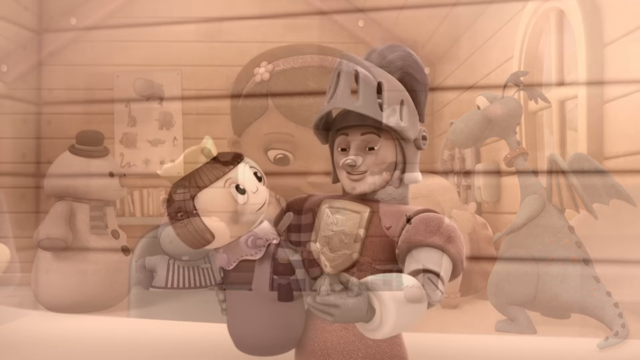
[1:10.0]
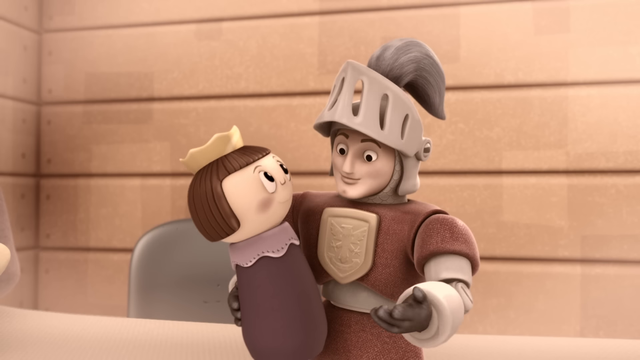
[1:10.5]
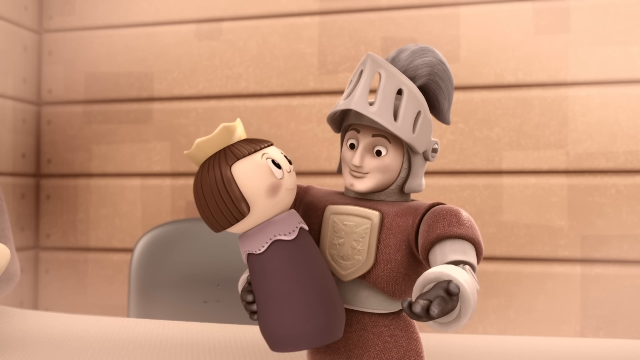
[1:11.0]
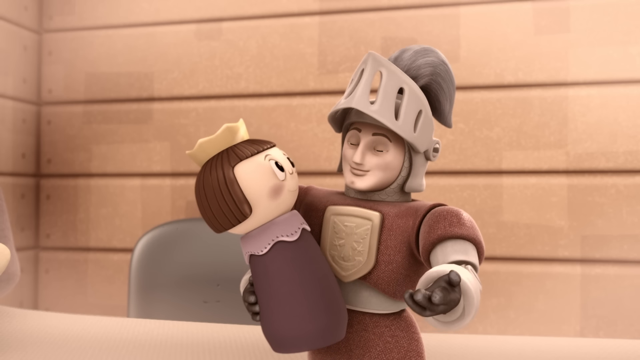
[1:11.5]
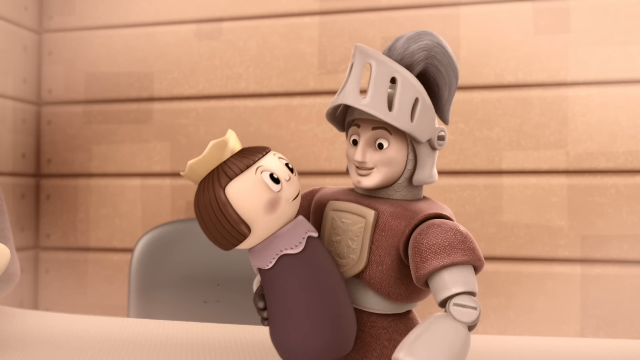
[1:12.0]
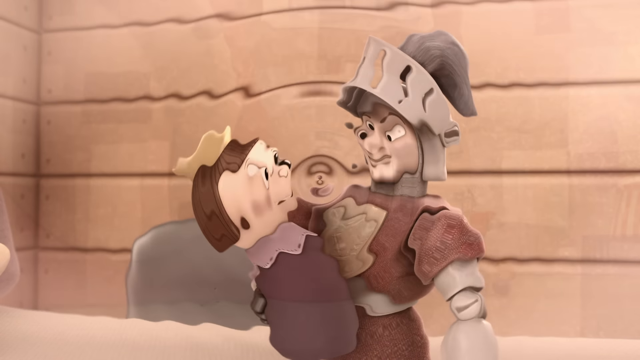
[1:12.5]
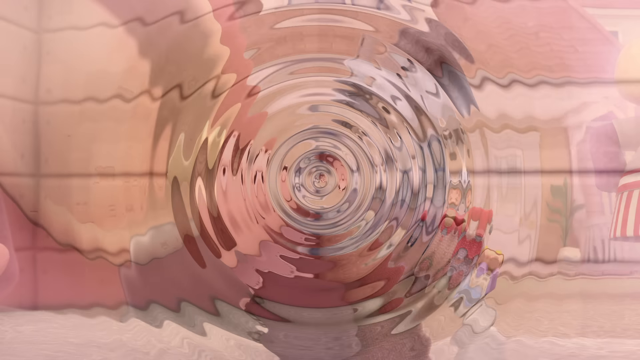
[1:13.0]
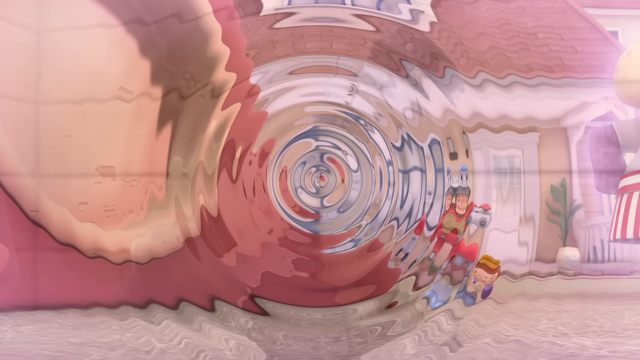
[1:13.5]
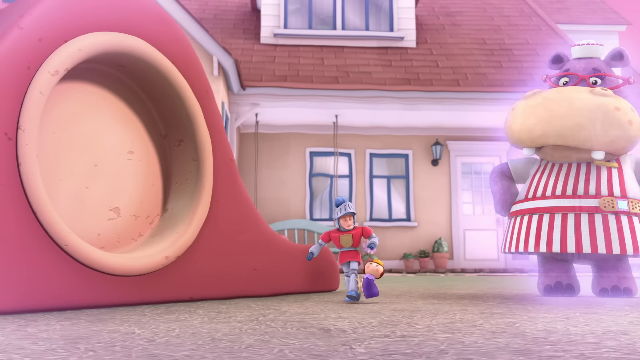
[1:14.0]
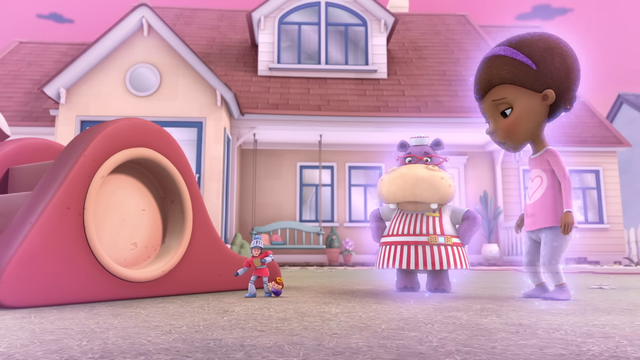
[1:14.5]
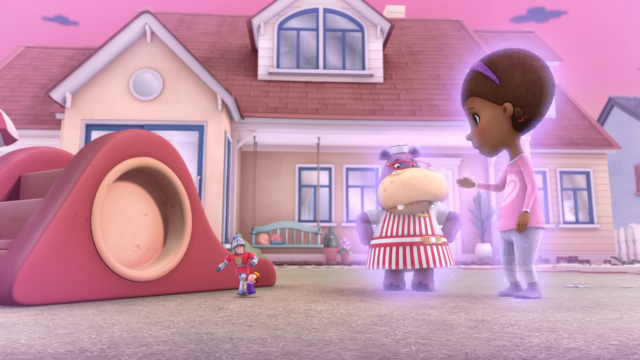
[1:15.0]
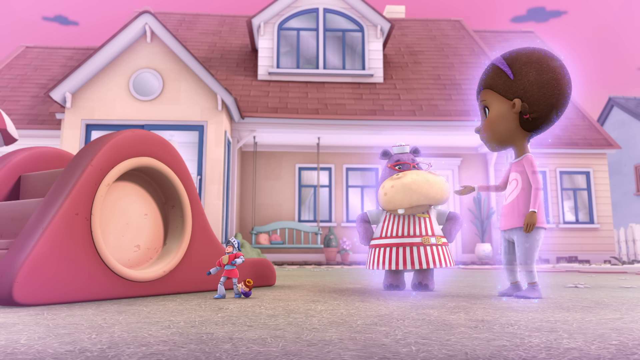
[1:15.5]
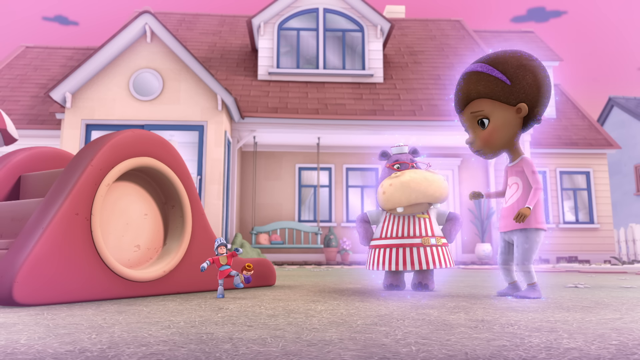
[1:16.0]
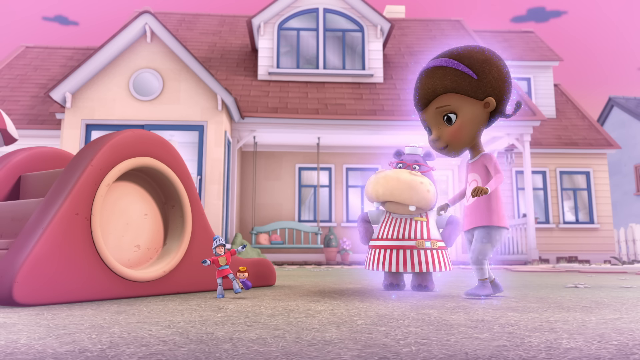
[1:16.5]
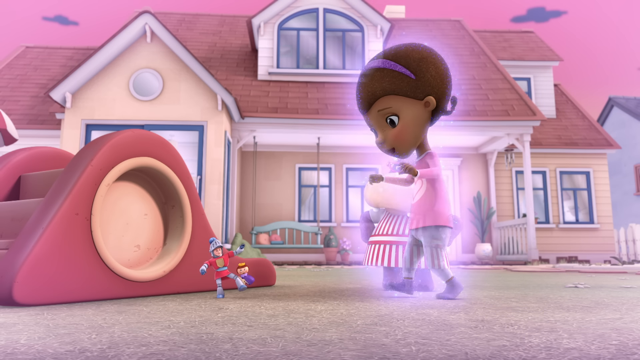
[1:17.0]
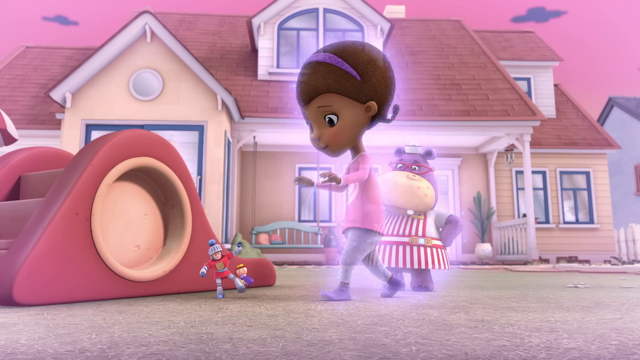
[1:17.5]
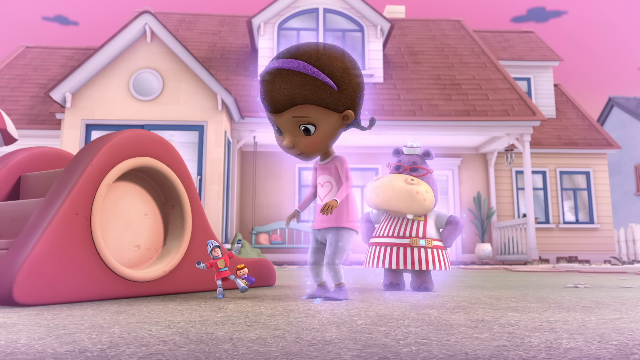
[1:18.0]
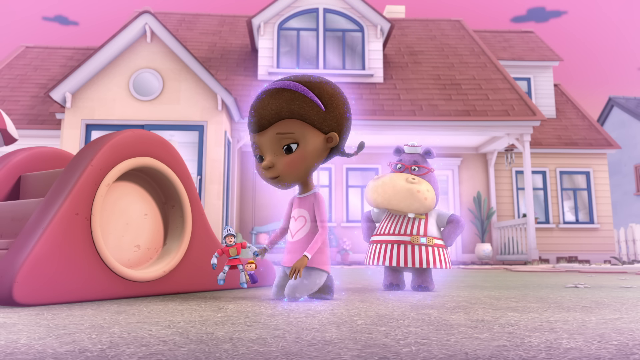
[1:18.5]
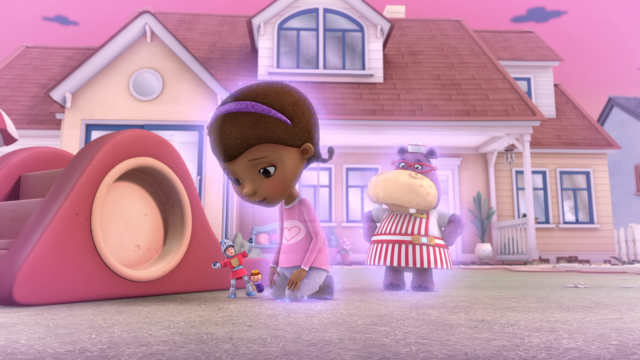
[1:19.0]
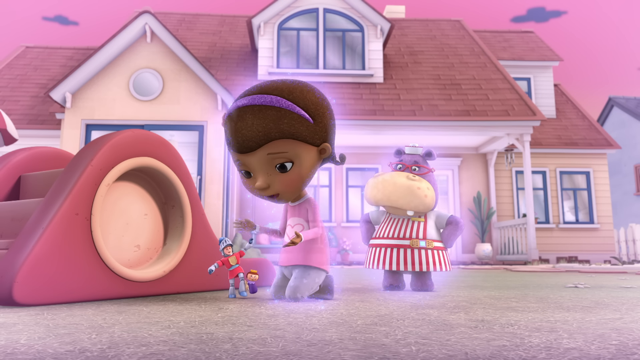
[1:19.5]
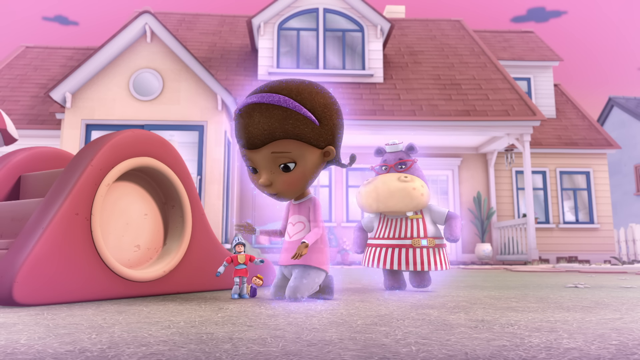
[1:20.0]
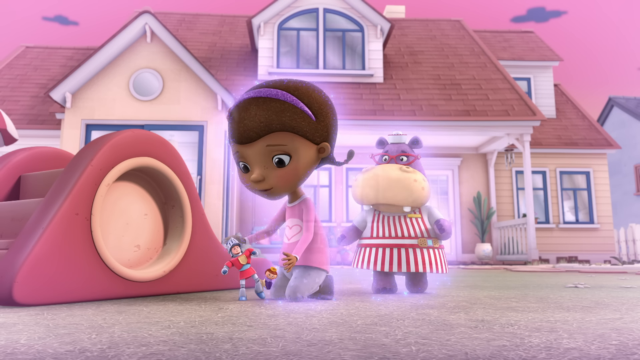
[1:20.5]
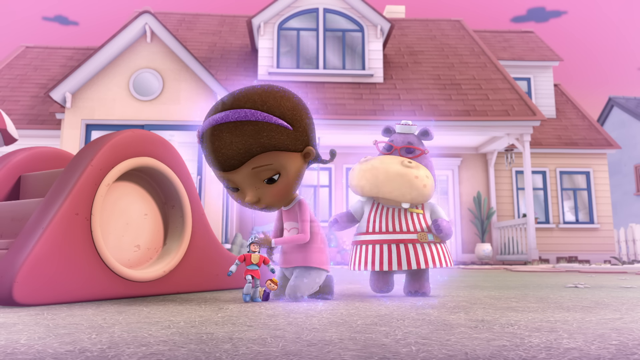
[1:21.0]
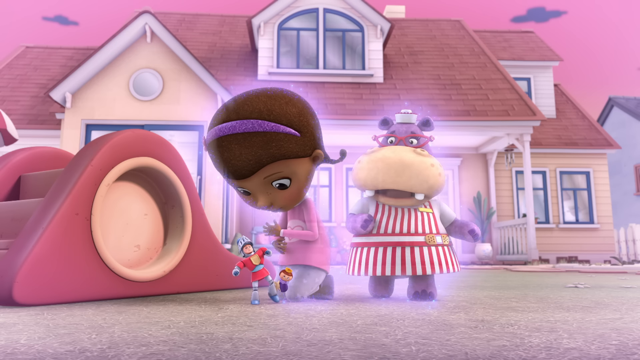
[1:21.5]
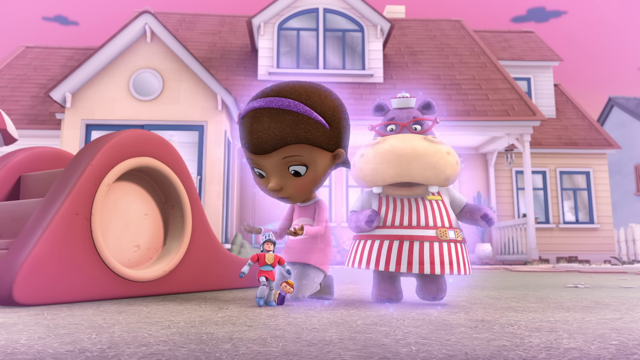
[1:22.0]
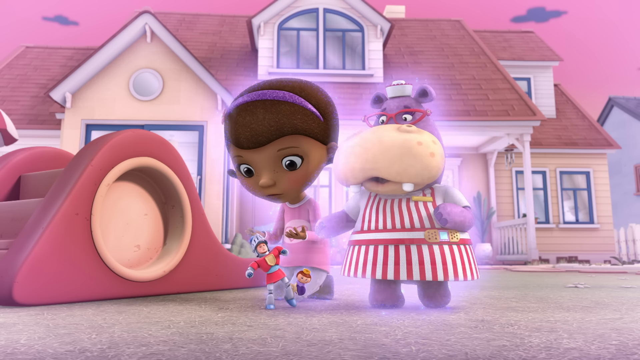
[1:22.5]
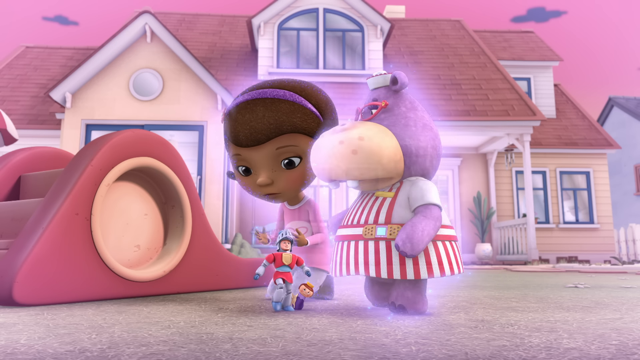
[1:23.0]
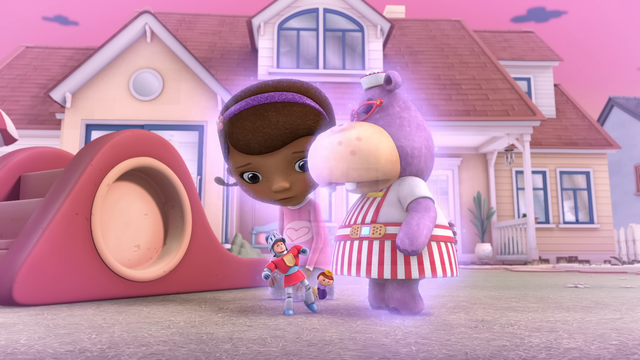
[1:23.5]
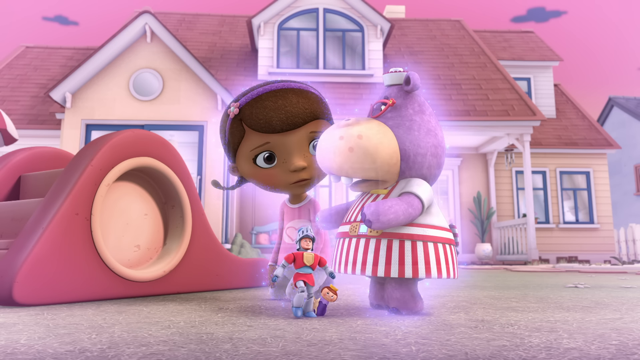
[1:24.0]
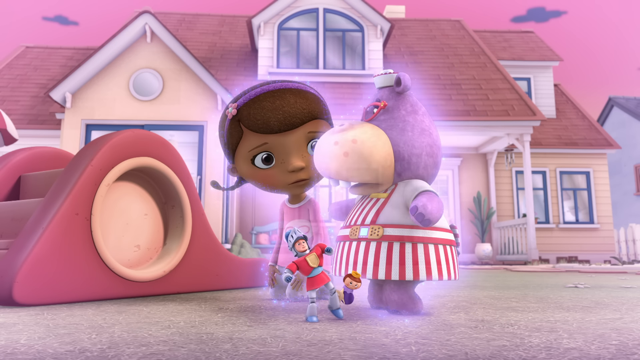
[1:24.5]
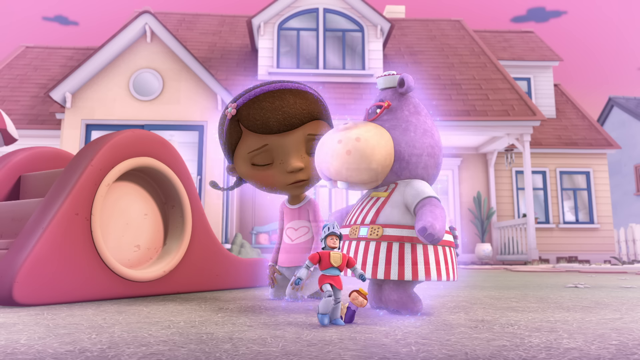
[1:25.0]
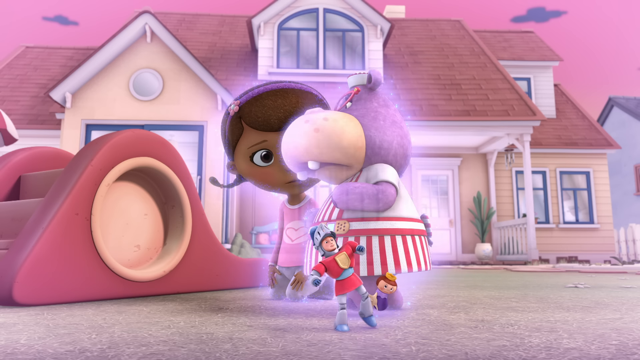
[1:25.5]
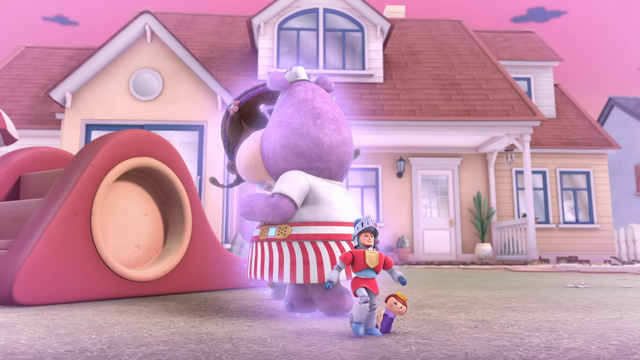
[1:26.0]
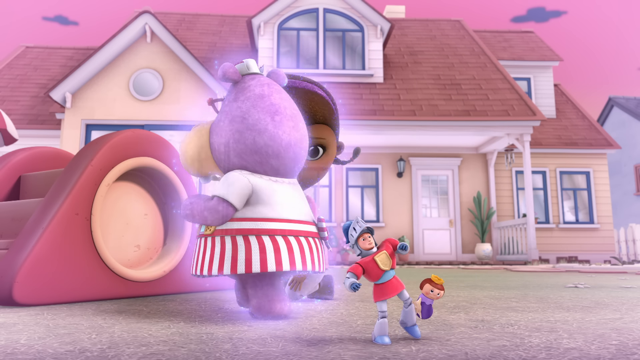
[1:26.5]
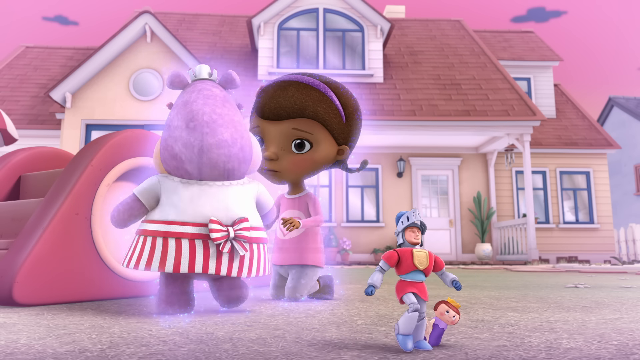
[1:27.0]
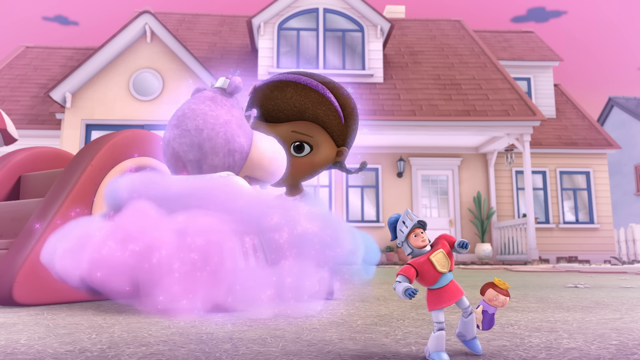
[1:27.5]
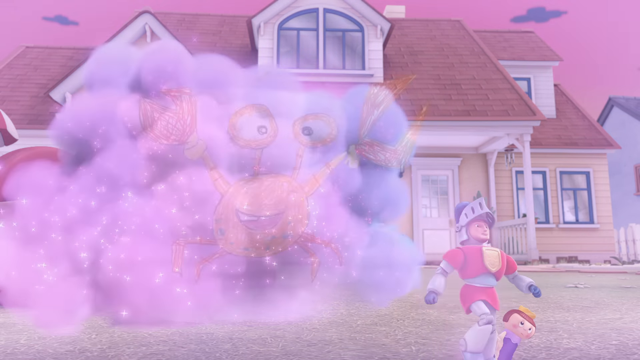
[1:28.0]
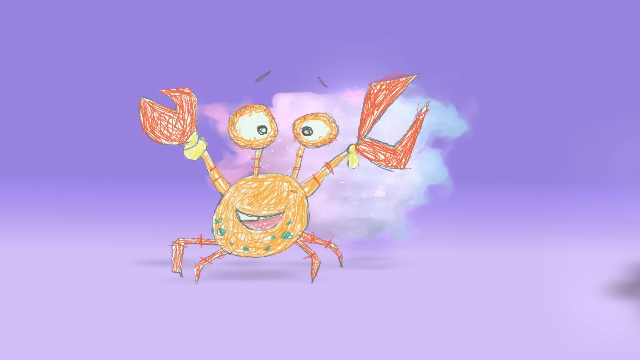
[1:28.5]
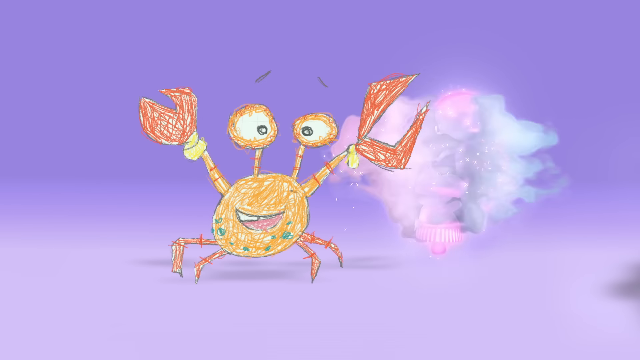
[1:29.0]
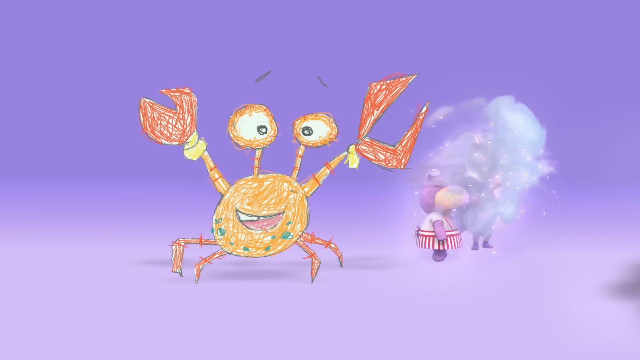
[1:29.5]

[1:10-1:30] Inside the little playhouse, with a brownish hue, there are the two toys: a soldier toy holding another toy. In the background there is a greenish dragon and a snowman picture on the wall. The little girl fades out as the view goes to a close-up of the soldier holding what appears to be a little girl toy, with a brown-green chair and brown walls. That fades back to the outside in front of the little girl's house, with its tan wall, red roof and blue-trimmed windows, next to the slide toy. The hippo in the red and white outfit and red glasses is on the right side of the screen. The little girl is also there: a dark-skinned girl with brown hair, a purple ribbon in her hair, a pink shirt with a heart on it, and purple shoes. She kneels down and talks to the little soldier toys, and the toys walk off. The sky has a pinkish-purple hue, with clouds like Chevy symbols or pizza symbols. Then there is a picture of a crab, a crayon drawing: it is orange with orange pincers, a yellowish body, pinkish legs and some green dots. The background is a purple sky with a little bit of smoke cloud.